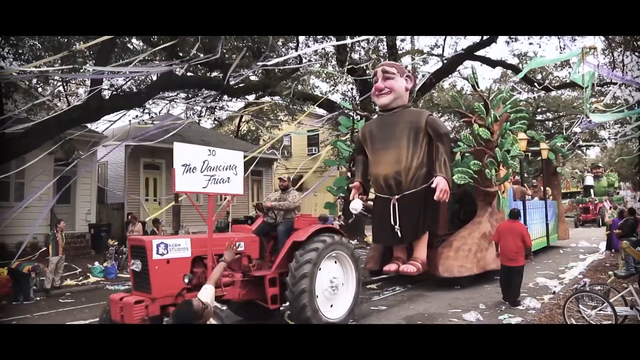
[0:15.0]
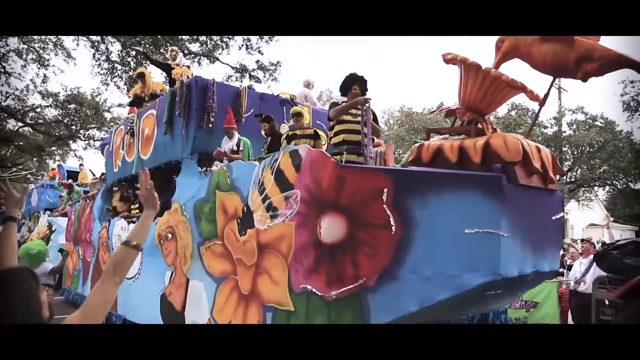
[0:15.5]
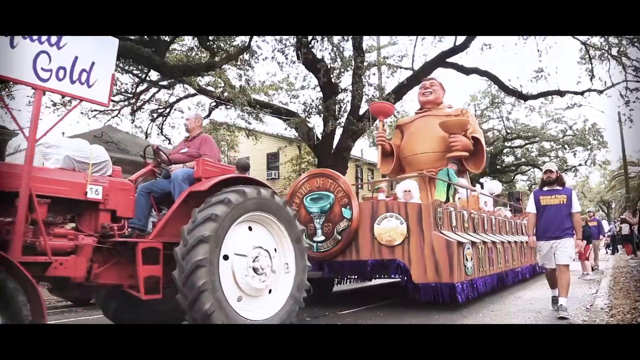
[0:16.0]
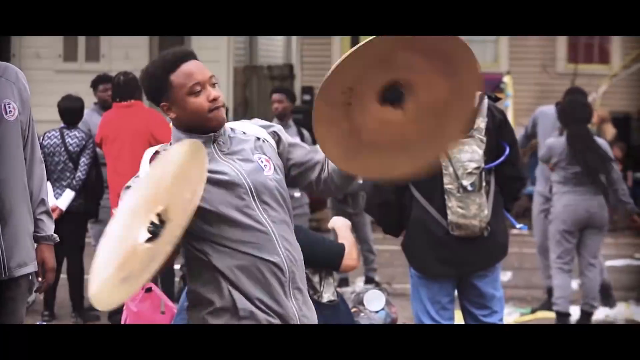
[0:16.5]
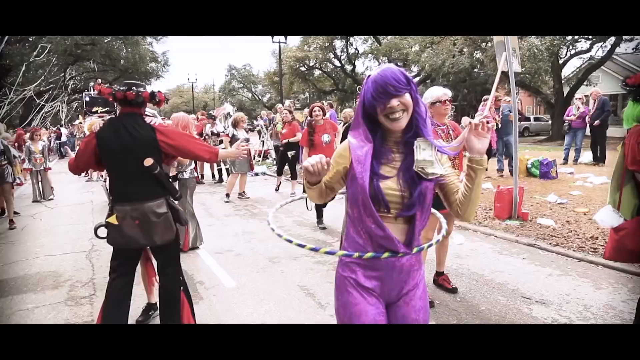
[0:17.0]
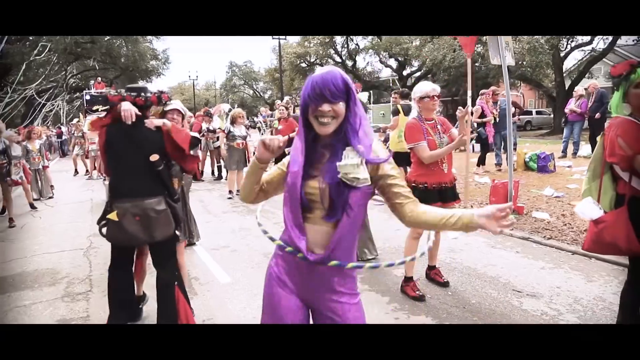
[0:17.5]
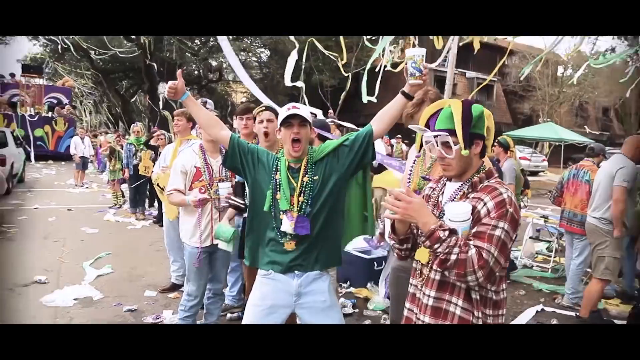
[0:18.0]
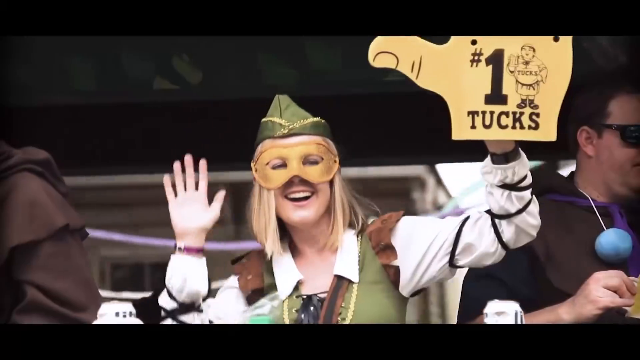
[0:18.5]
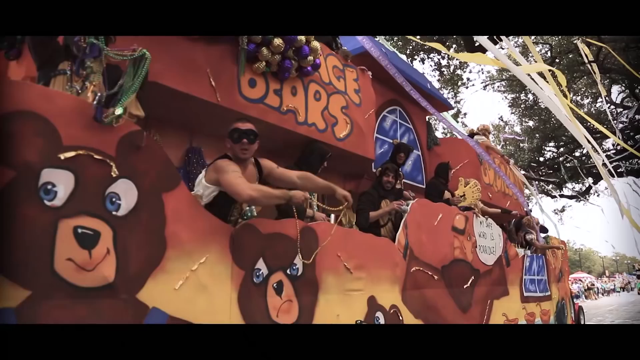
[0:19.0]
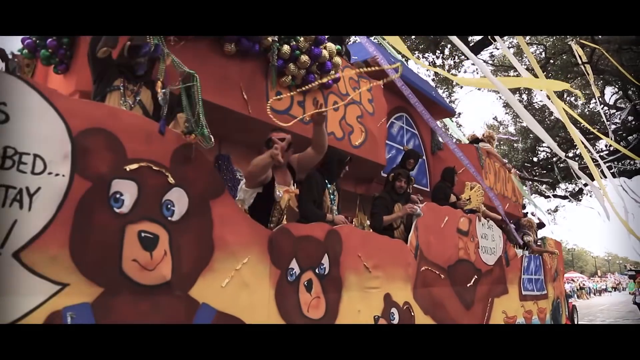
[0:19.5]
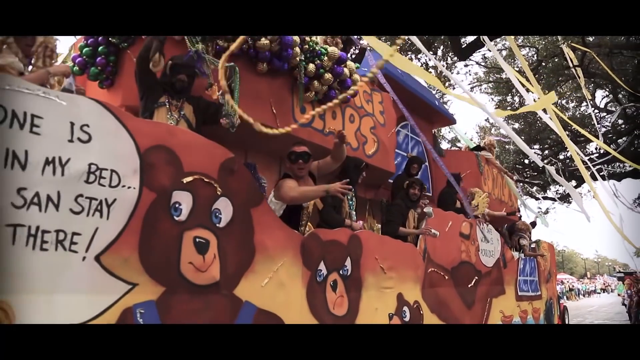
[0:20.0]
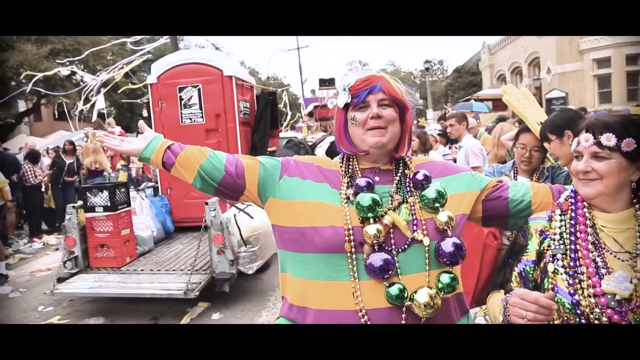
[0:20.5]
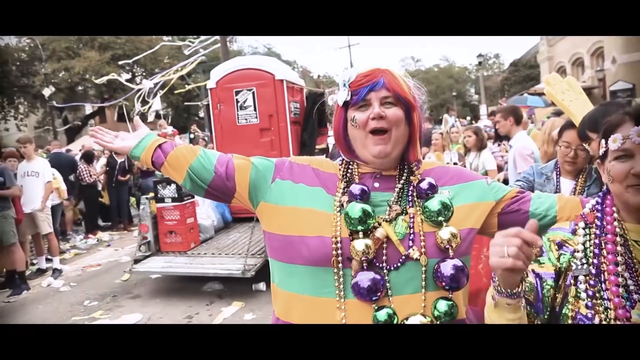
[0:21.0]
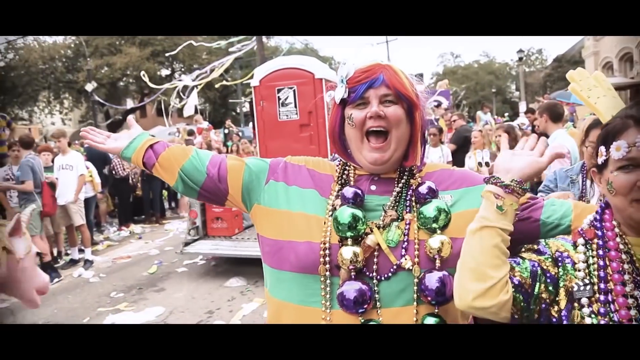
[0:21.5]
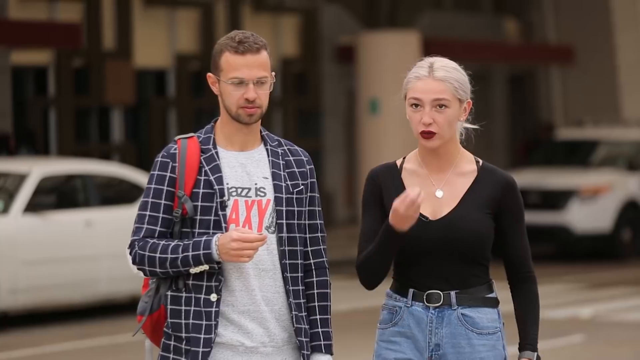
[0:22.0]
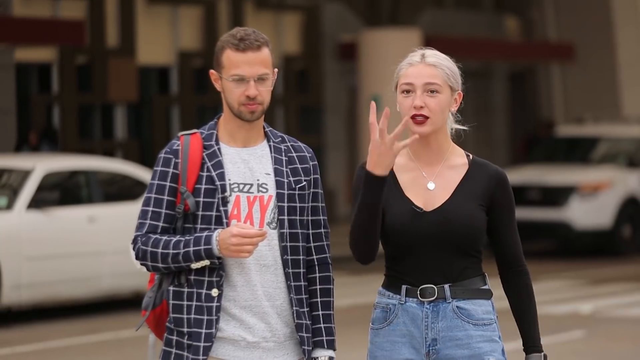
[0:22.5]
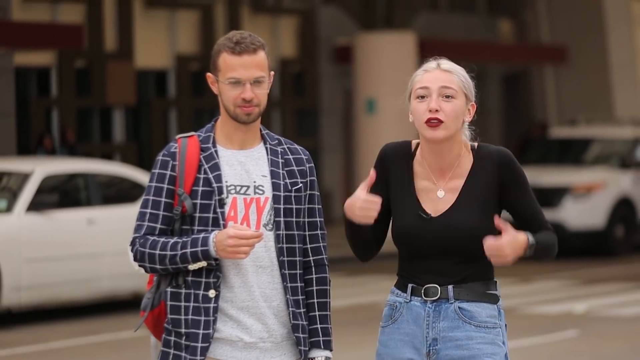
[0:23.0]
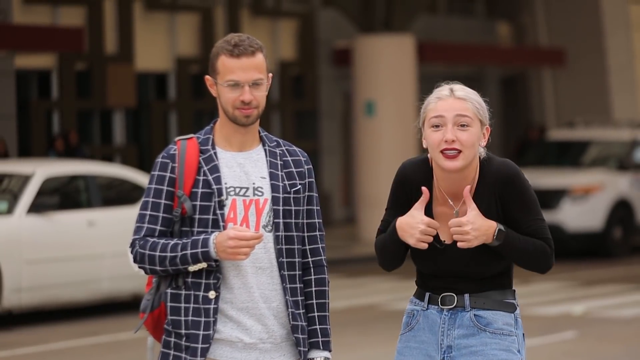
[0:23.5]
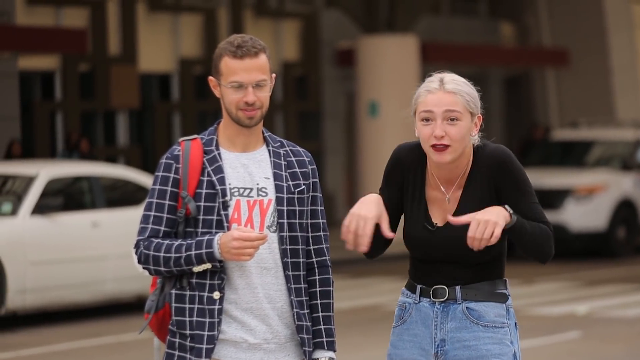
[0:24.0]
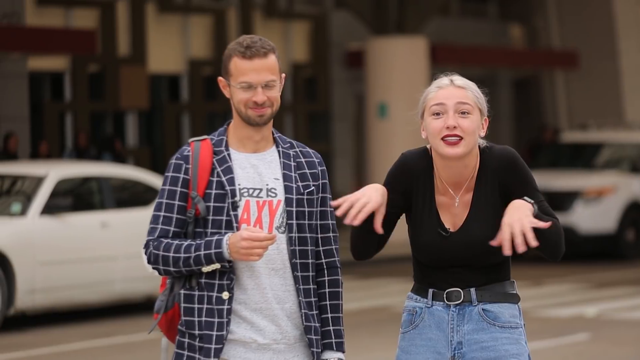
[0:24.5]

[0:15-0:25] A parade takes place, with many people both on the floats and in the crowd watching. Various floats go by, including one carrying a statue of a monk dressed in brown garb and another very colorful float. A woman wearing purple dances with a hula hoop in the middle of the street, and a float pulls some orange or red porta potties. A man in the middle of the street holds large cymbals, like those on a drum set, banging them and shaking them around. Some people in the crowd wear lots of beads around their necks, and toilet paper hangs off some of the trees. The atmosphere is very festive. At the end, the man in the t-shirt with a blue plaid shirt over it and the woman in jeans and a black shirt, with blonde hair in a ponytail, appear to be talking about something they have seen in the parade, and she makes a chef's kiss gesture with her hand.